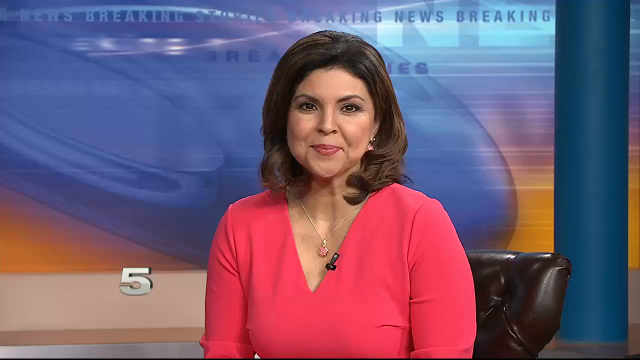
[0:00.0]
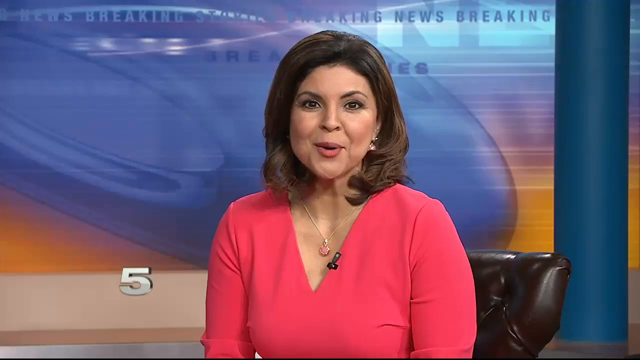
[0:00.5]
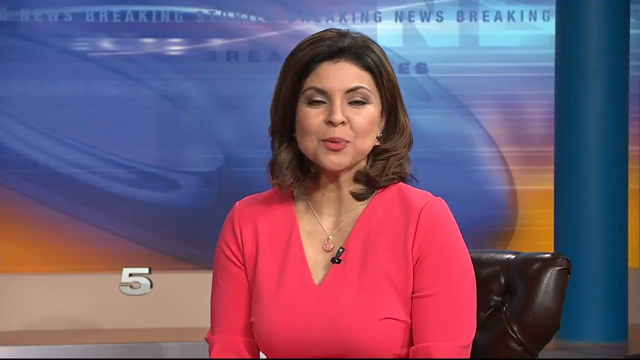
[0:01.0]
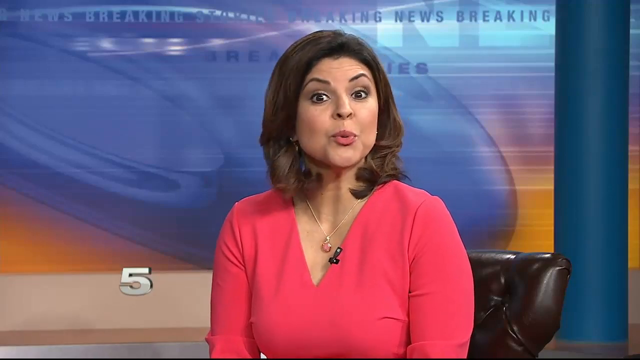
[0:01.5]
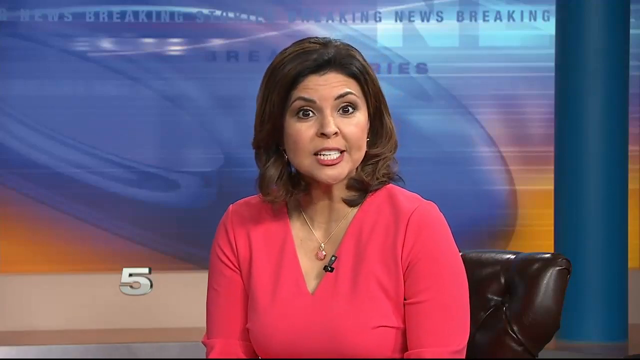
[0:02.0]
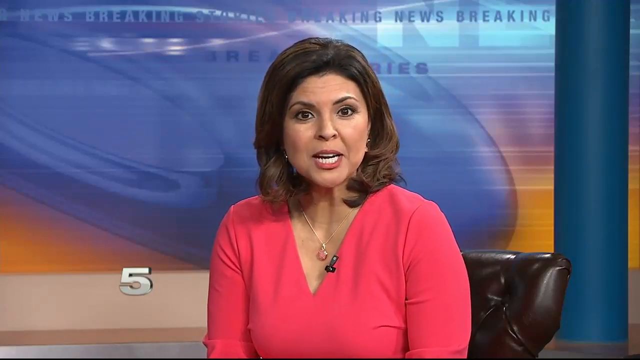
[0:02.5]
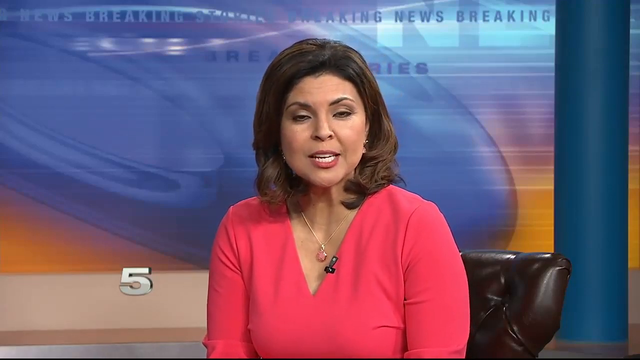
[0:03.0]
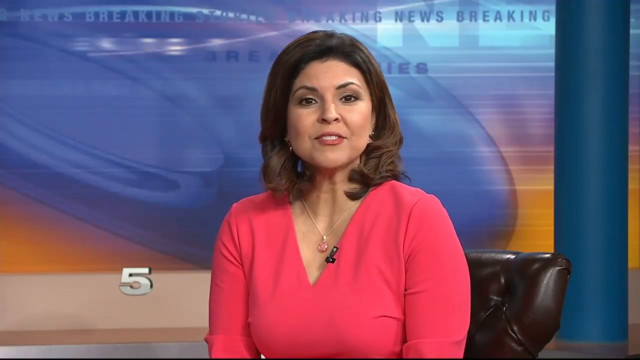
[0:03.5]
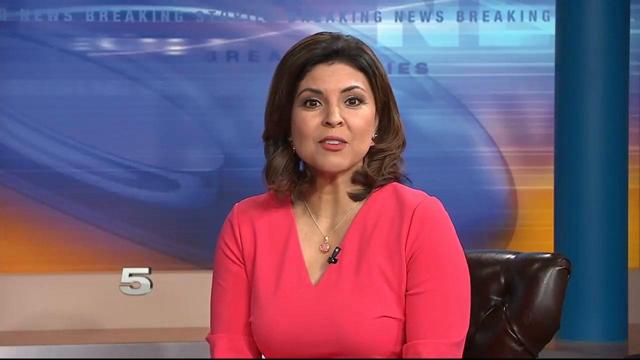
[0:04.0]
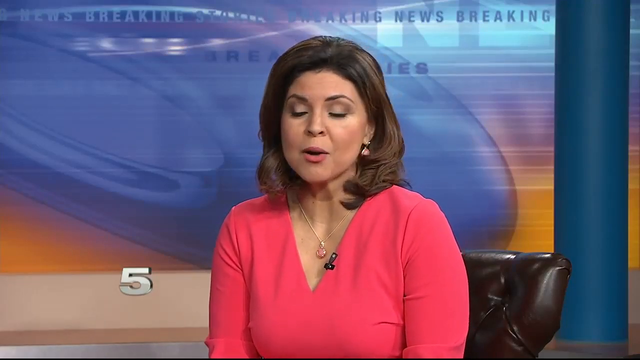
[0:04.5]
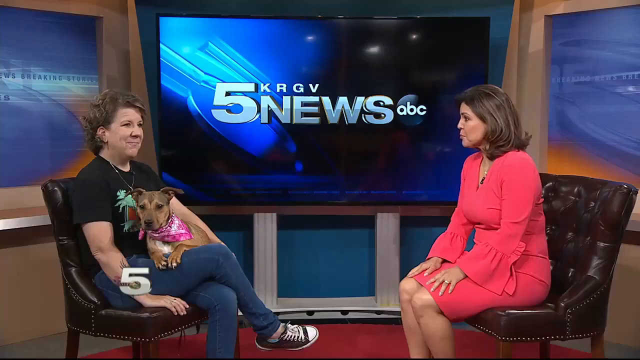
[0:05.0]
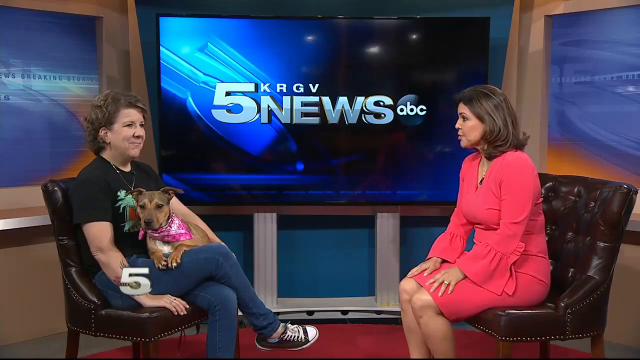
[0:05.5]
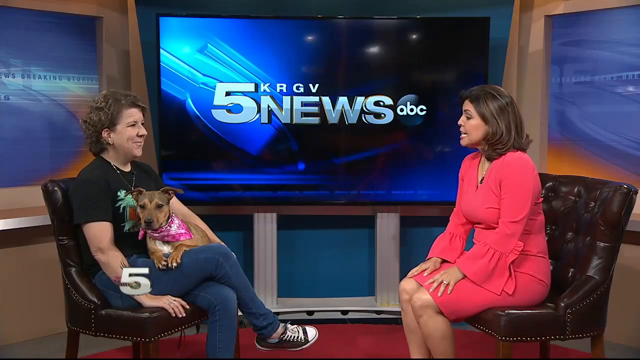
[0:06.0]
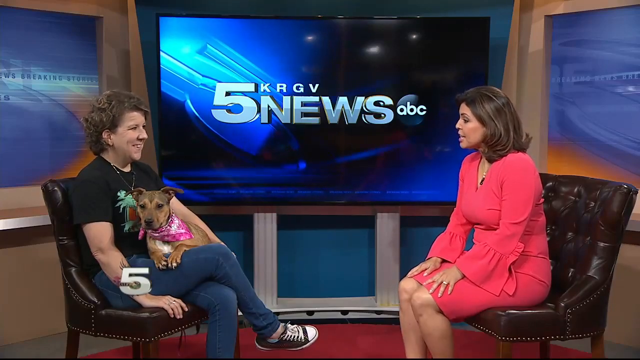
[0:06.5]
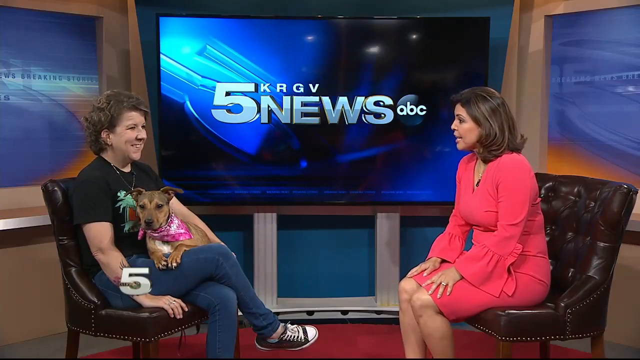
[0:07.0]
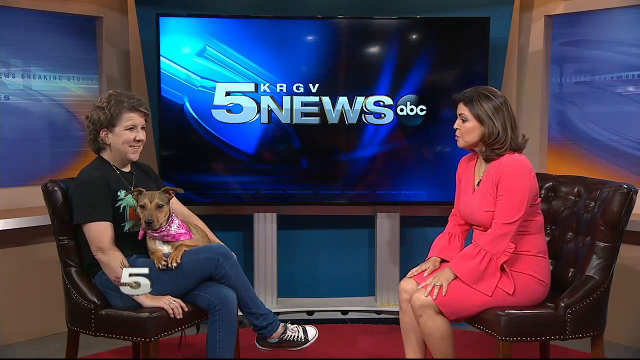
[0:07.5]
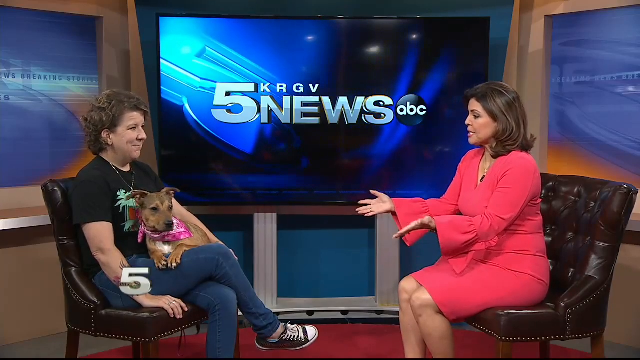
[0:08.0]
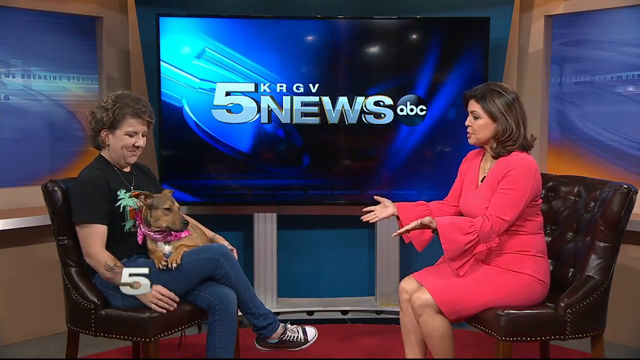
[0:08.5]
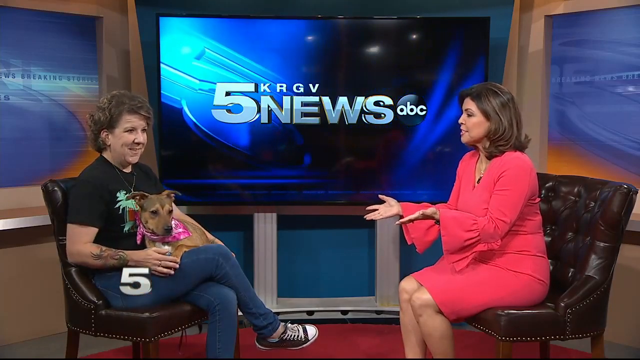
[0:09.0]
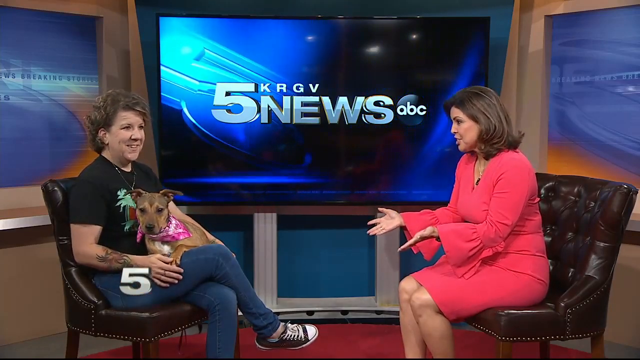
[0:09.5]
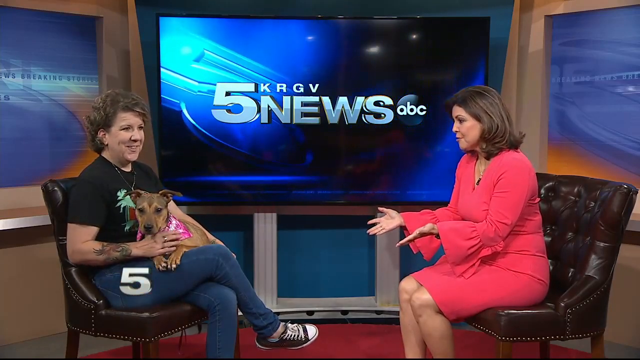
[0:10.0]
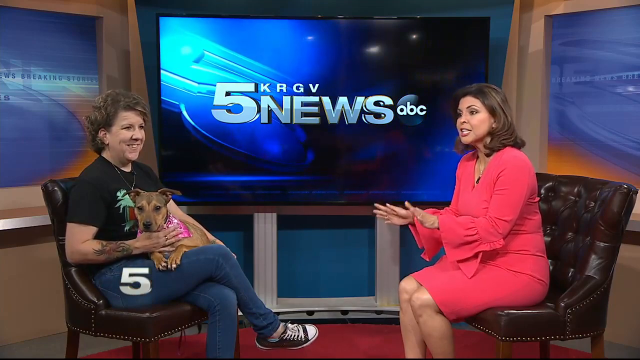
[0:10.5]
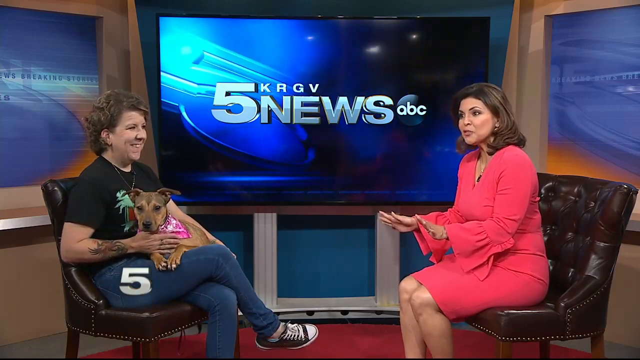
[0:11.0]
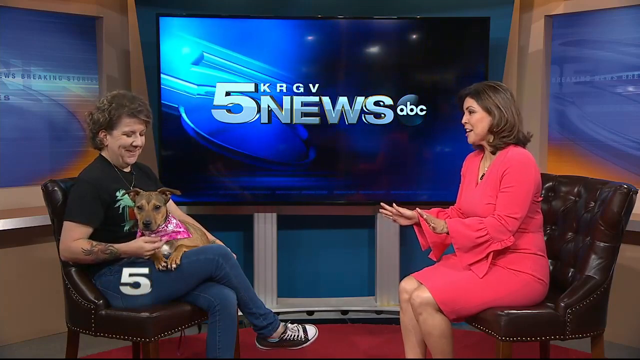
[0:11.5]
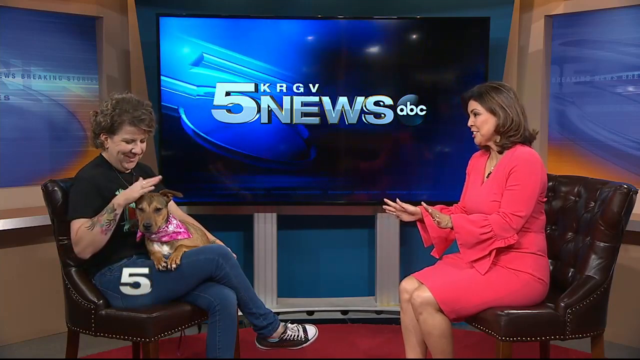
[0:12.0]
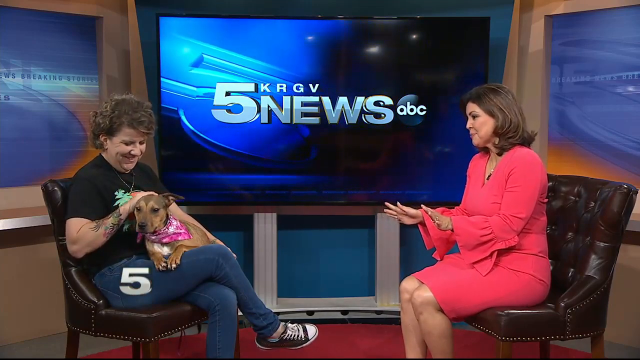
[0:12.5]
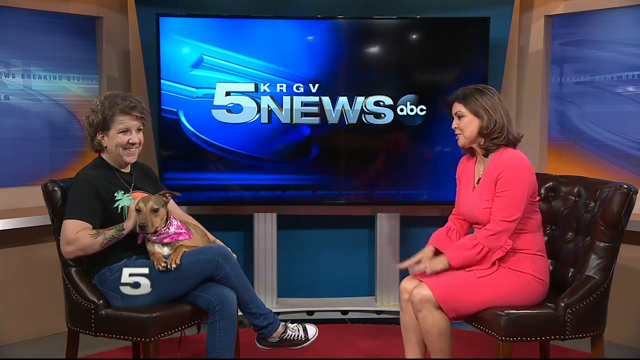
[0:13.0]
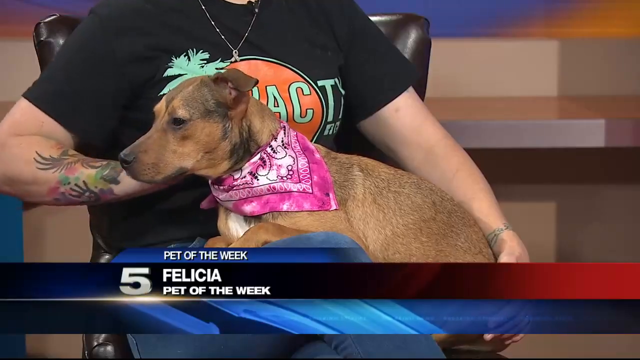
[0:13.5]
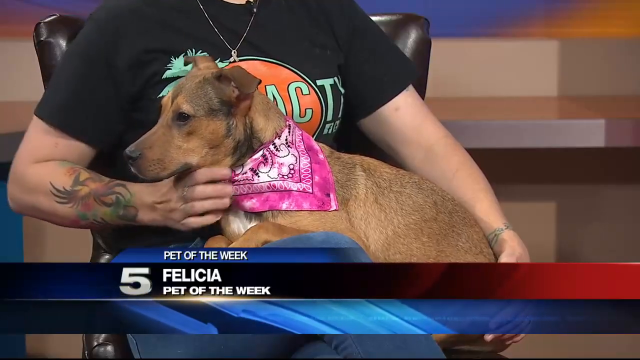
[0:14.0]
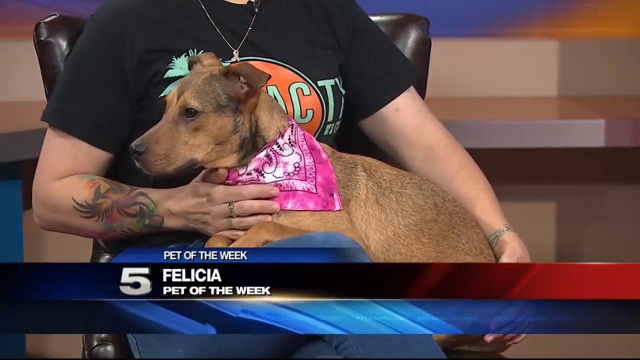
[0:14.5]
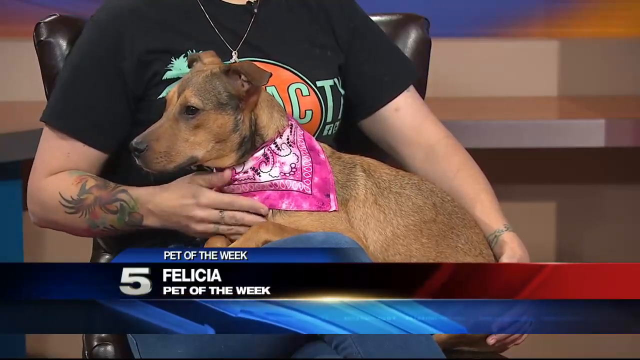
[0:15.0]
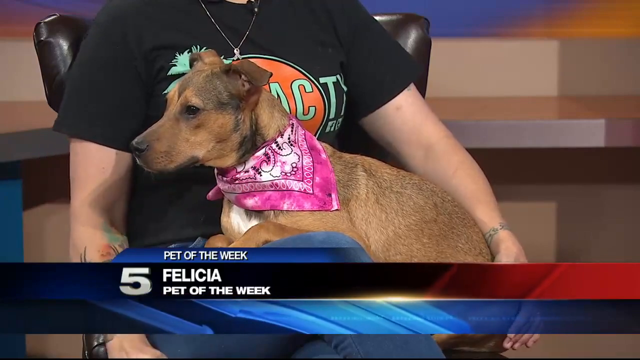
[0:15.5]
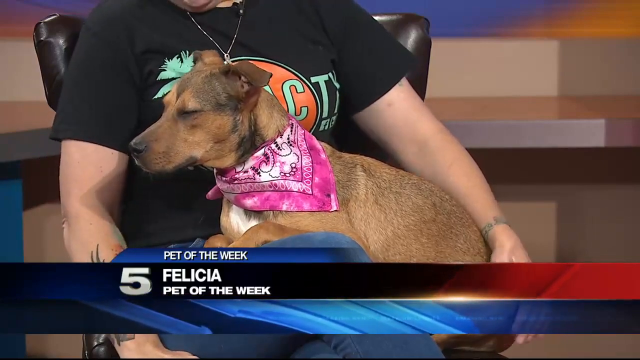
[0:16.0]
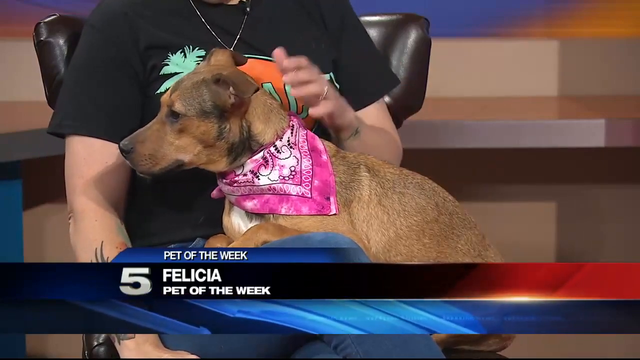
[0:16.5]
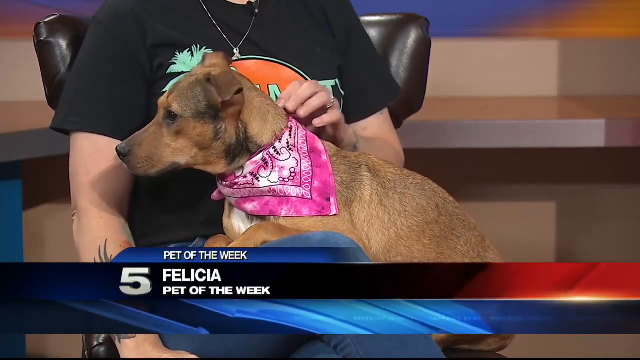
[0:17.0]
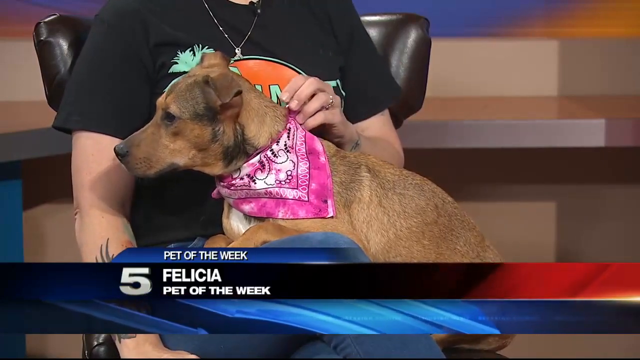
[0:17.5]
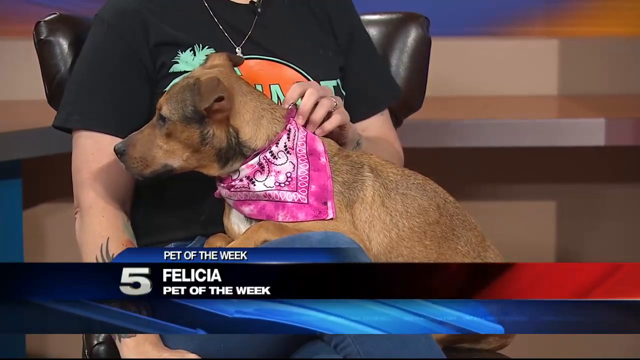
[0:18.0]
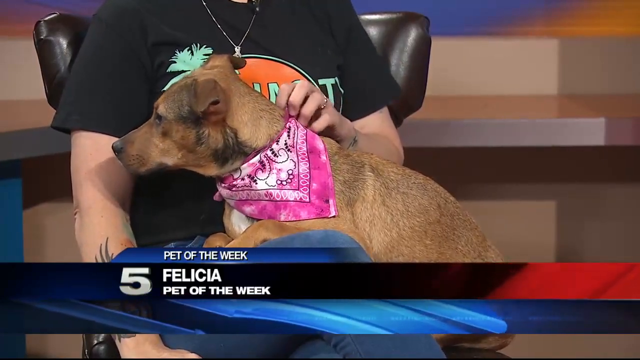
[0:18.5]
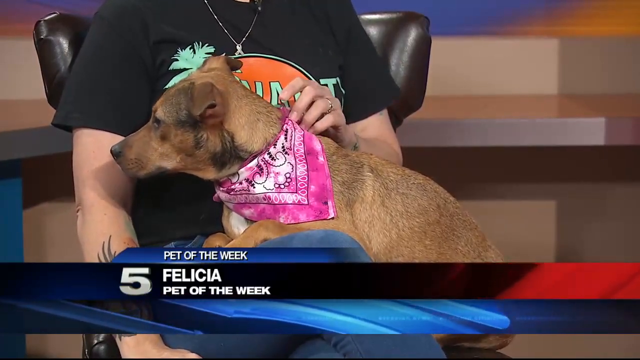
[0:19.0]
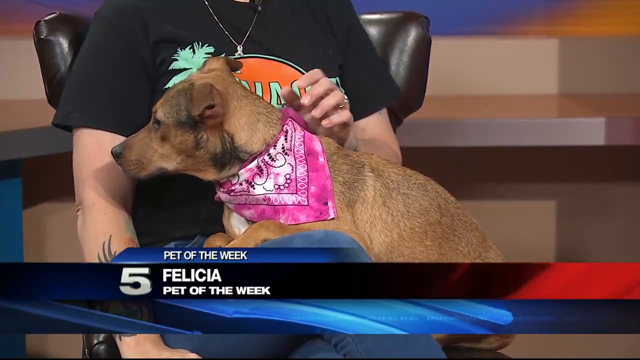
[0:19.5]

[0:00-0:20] A news anchor in a red or pink dress, with shoulder-length hair and wearing makeup, is talking with and interviewing another woman in the newsroom who has a dog on her lap. The woman with the dog is on the left, and the news anchor is on the right. The woman with the dog has short hair and wears Converse, jeans, and a black t-shirt with a logo design featuring palm trees. The dog on her lap has a pink bandana wrapped around its neck. The woman pets the dog around the head with her hands. Both women are smiling. The woman on the left places her right hand on the dog's chest to calm it and begins petting it, and the dog seems very calm.